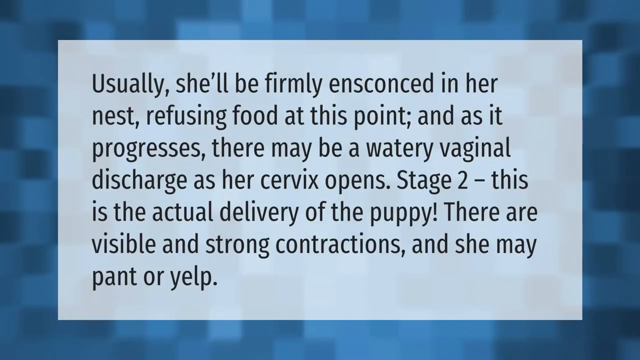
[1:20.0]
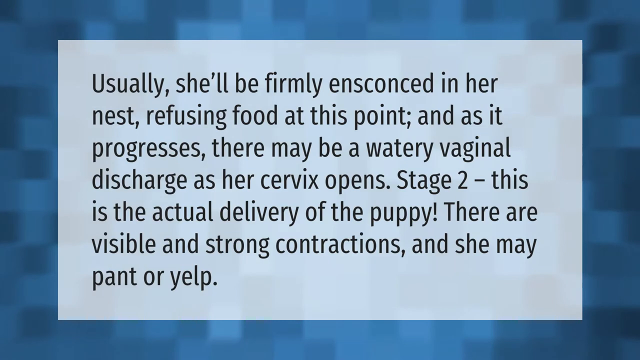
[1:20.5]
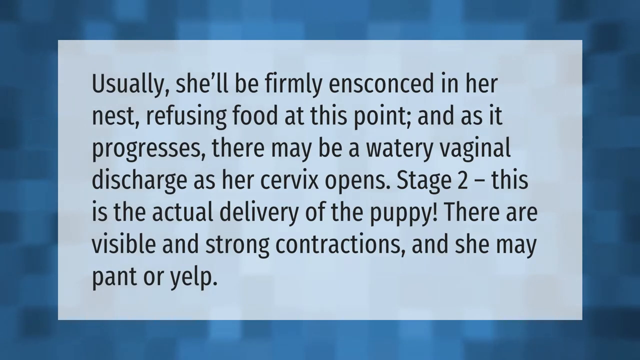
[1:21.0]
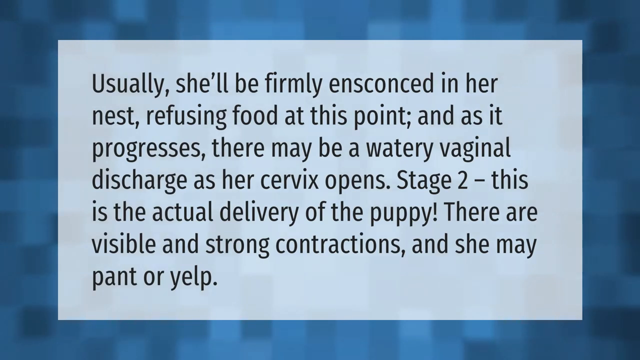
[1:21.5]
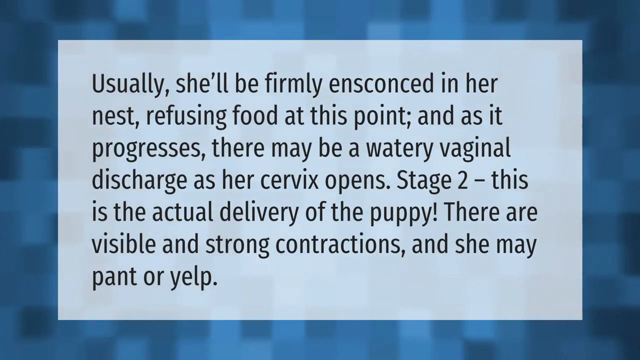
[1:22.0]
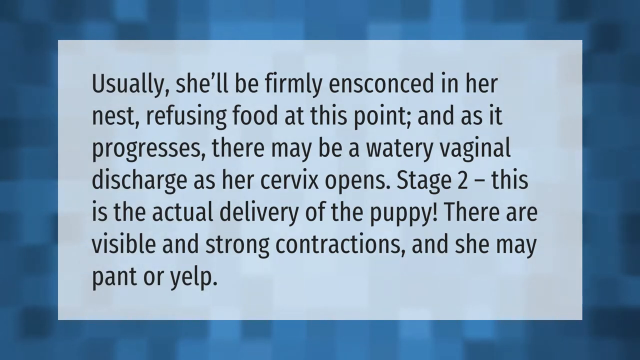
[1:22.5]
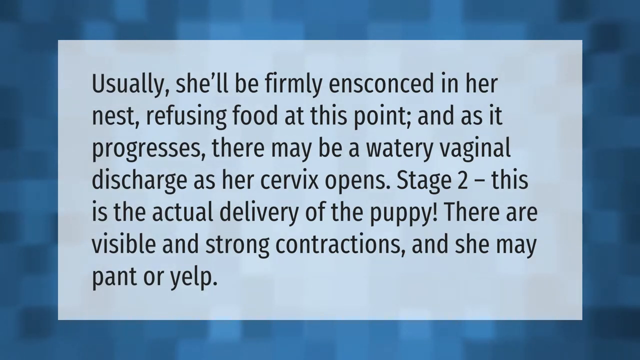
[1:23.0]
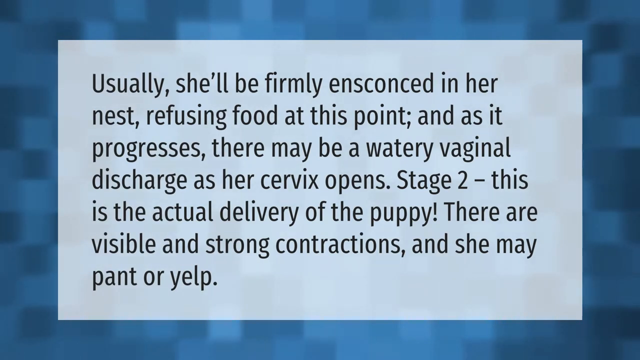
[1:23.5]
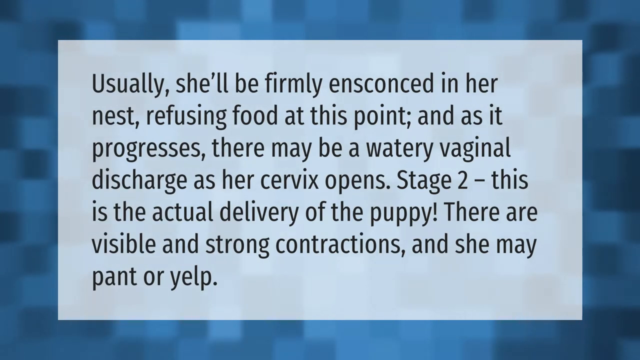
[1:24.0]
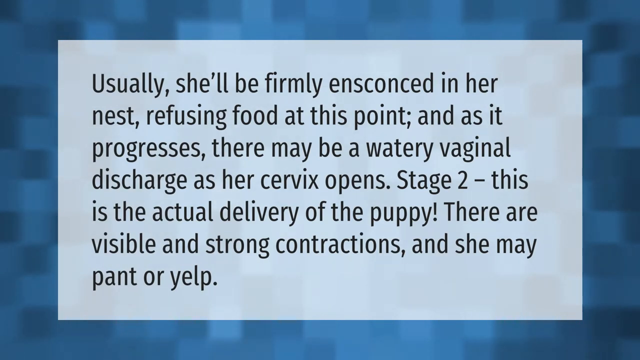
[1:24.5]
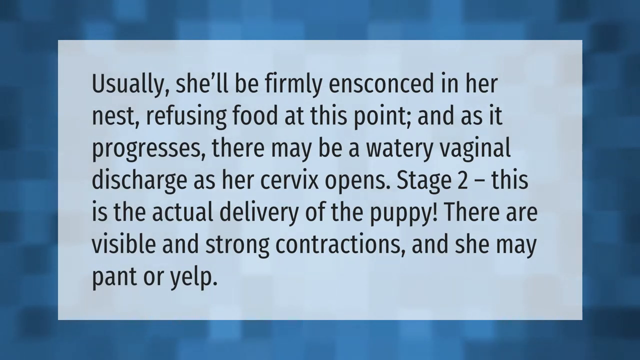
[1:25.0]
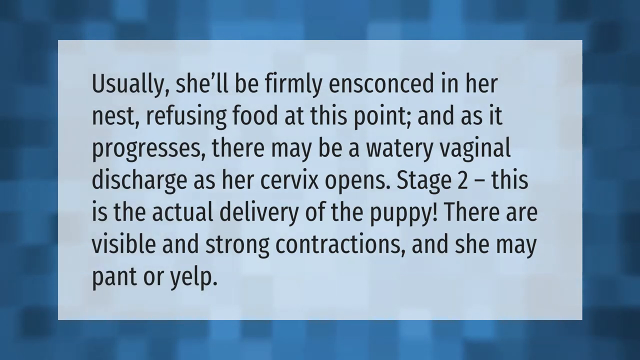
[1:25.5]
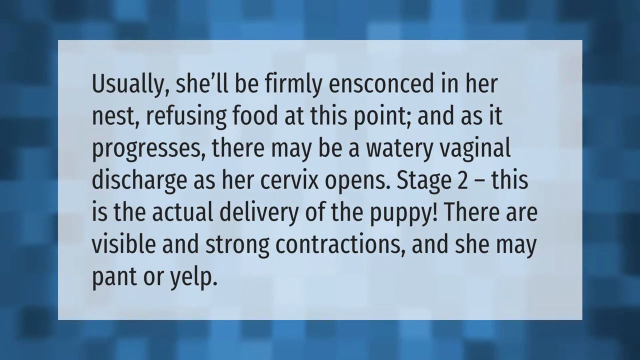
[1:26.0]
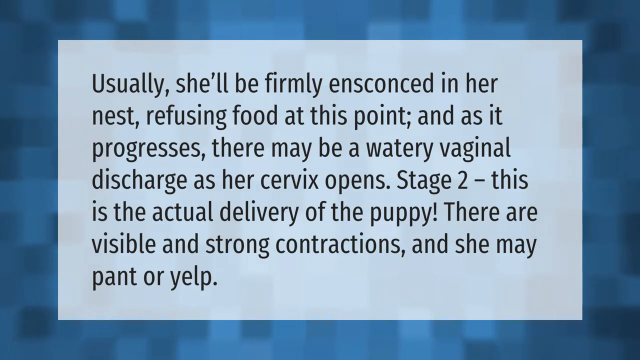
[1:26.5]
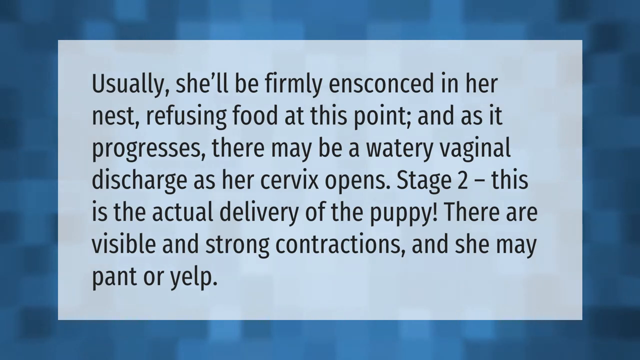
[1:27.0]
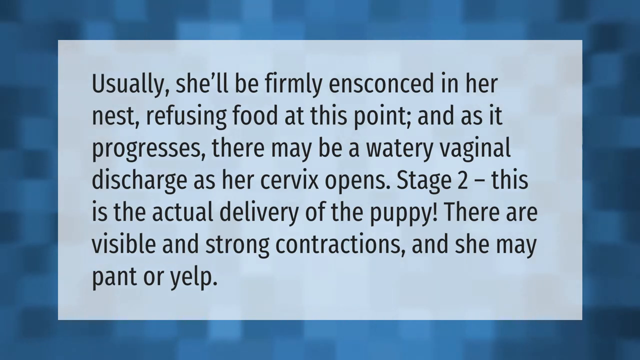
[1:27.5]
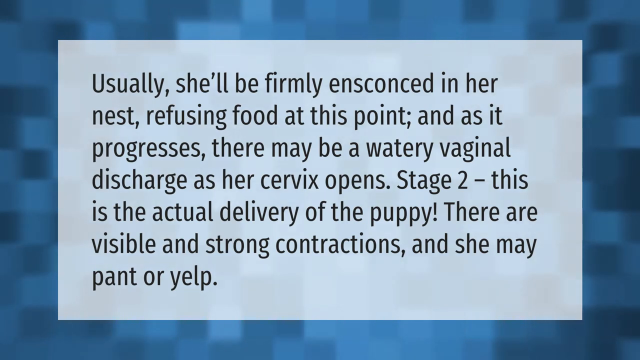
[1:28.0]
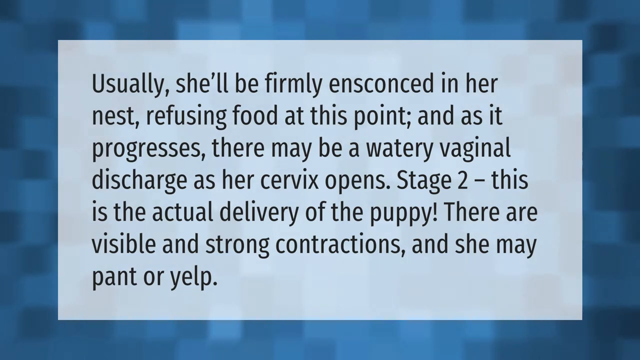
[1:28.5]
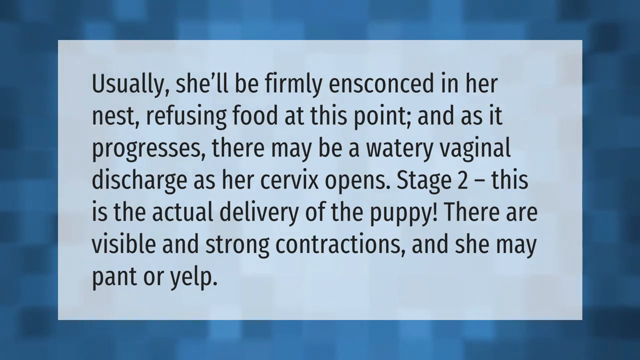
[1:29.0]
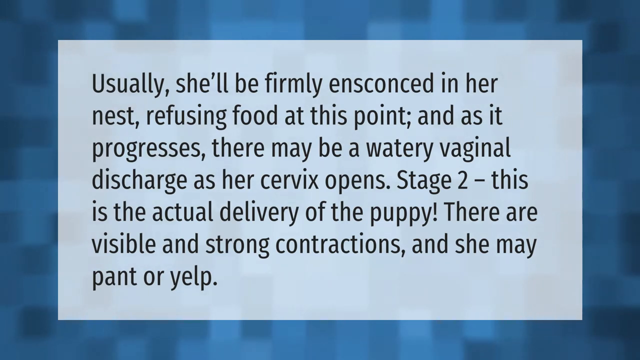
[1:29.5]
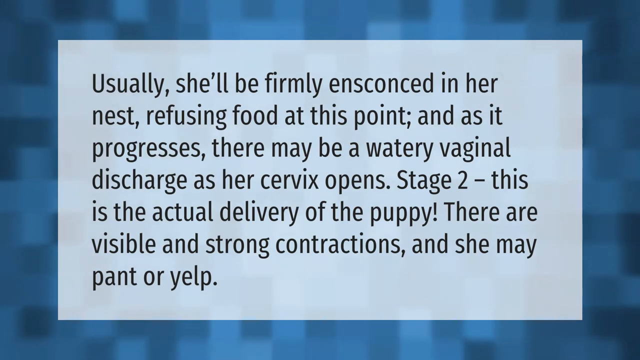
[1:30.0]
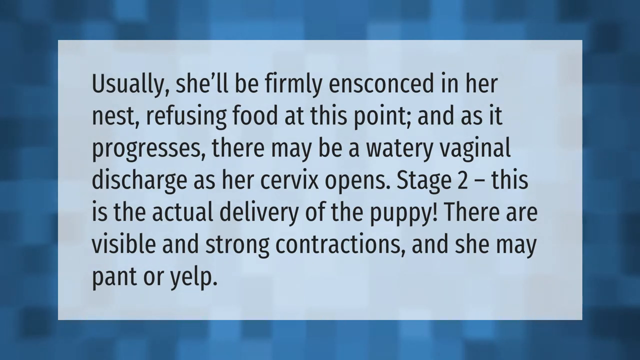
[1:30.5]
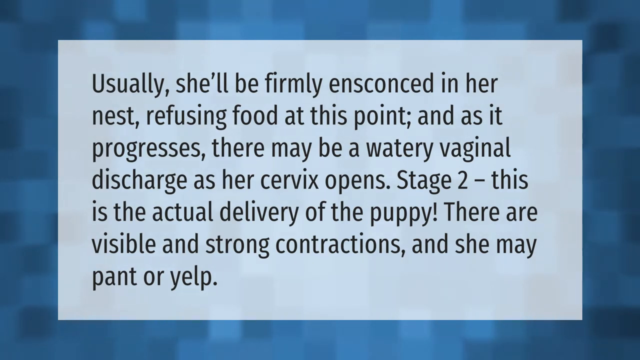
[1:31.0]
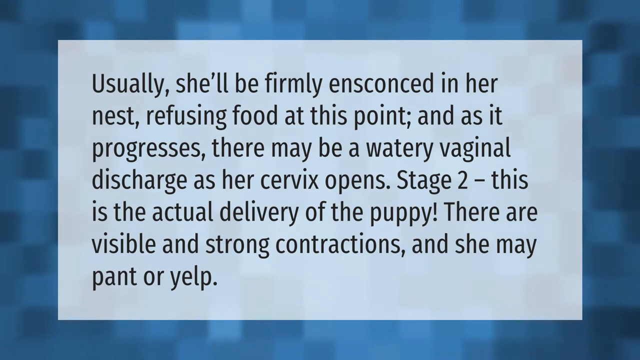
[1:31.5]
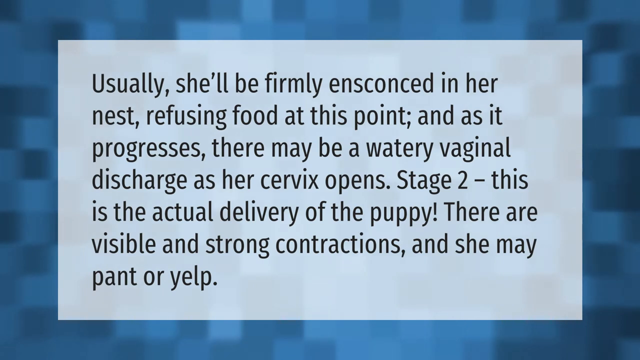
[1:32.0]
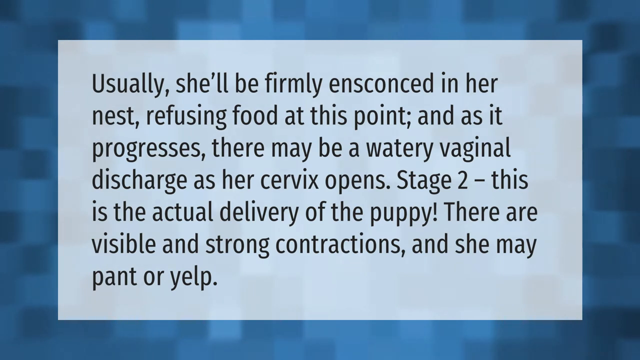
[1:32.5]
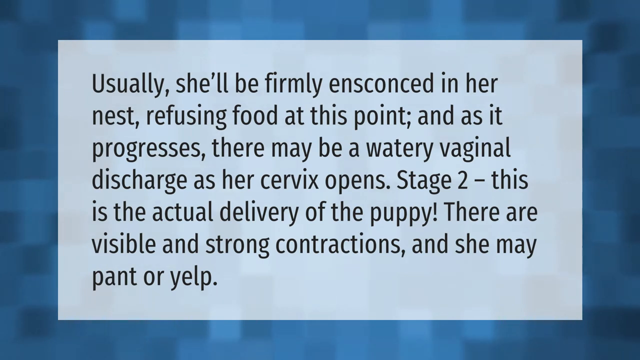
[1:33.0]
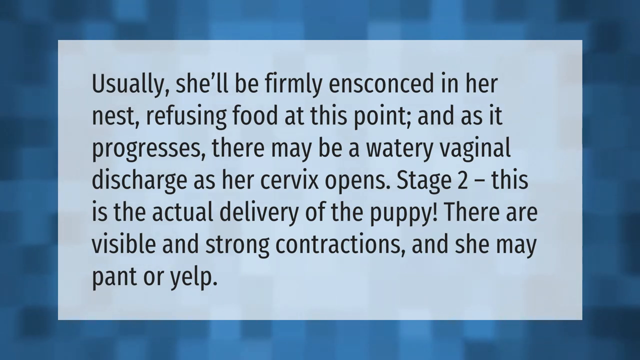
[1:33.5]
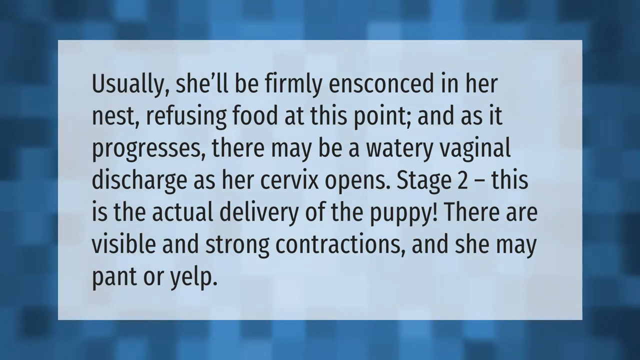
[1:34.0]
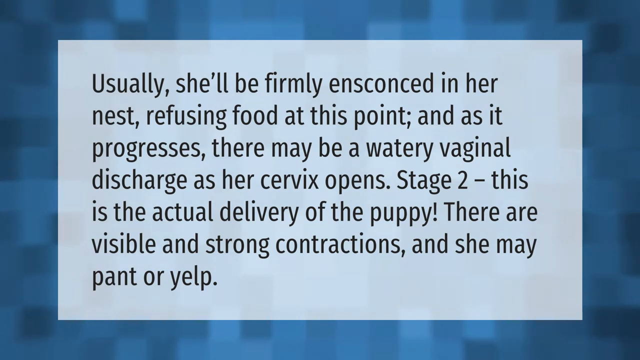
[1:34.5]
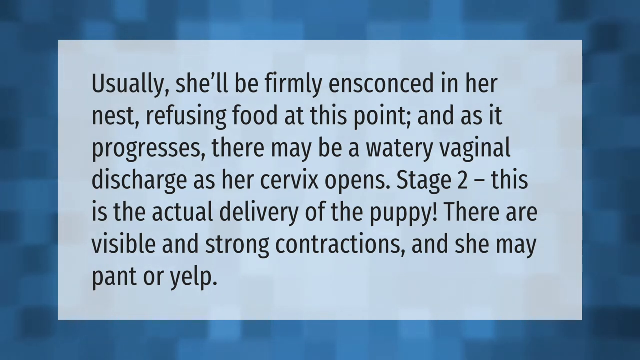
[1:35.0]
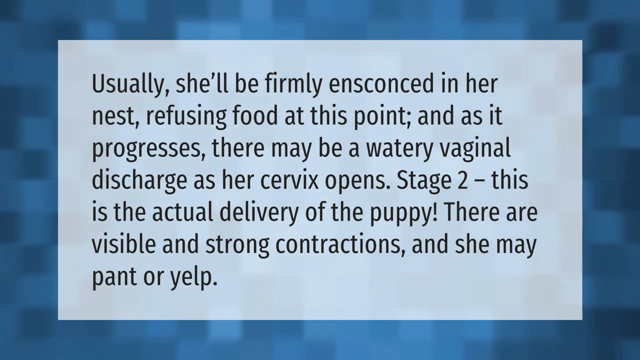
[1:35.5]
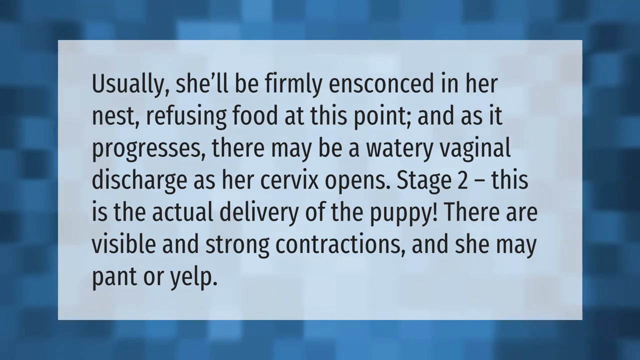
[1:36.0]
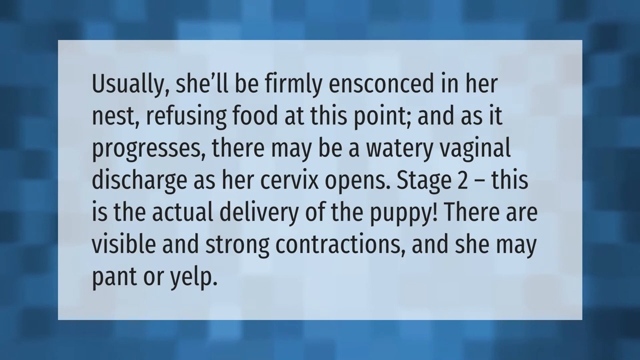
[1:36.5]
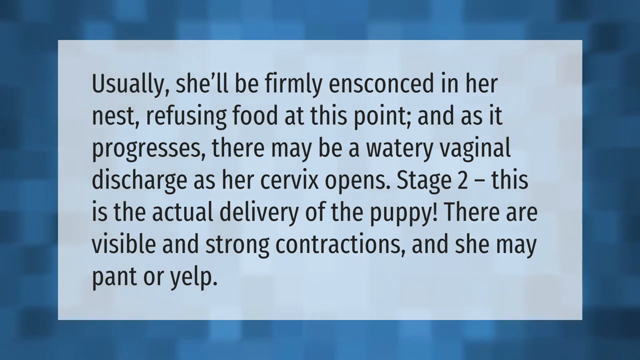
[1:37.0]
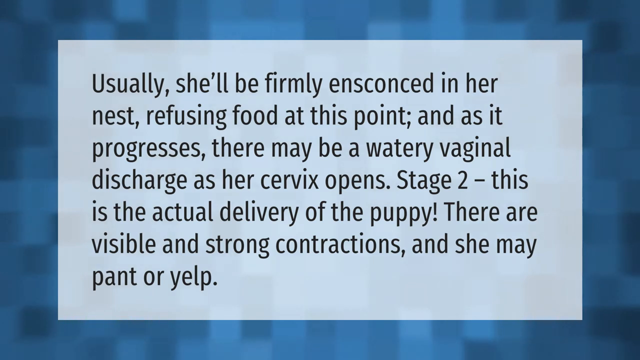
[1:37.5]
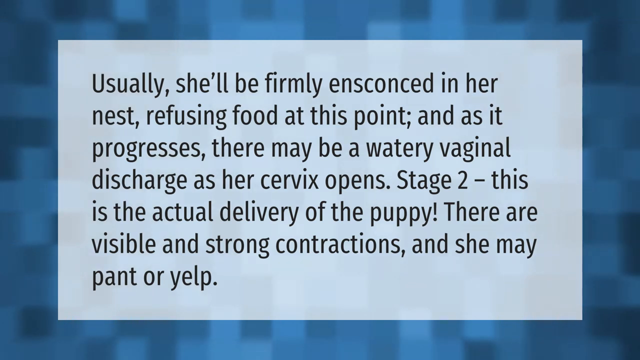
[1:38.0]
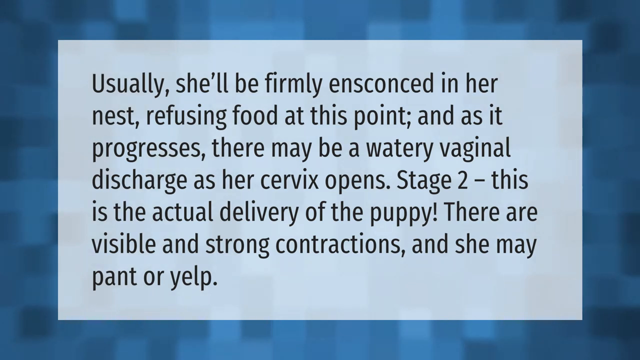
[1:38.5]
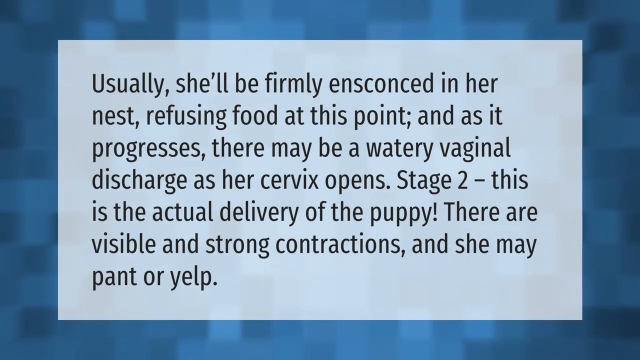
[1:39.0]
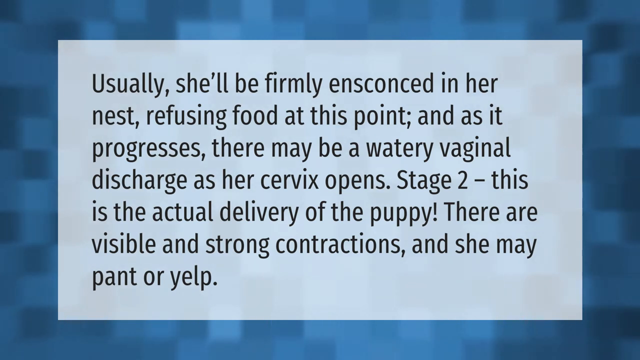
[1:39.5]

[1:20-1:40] The dark blue screen with dark squares and a rectangle in the middle continues to read "usually she'll be firmly ensconced in her nest refusing food at this point and as it progresses there may be a watery vaginal discharge as her cervix opens stage two this is the actual delivery of the puppy there are visible and strong contractions as she may pant or yelp." The screens stay the same: a dark blue background with darker-colored squares and a big lighter blue or white rectangle in the middle.